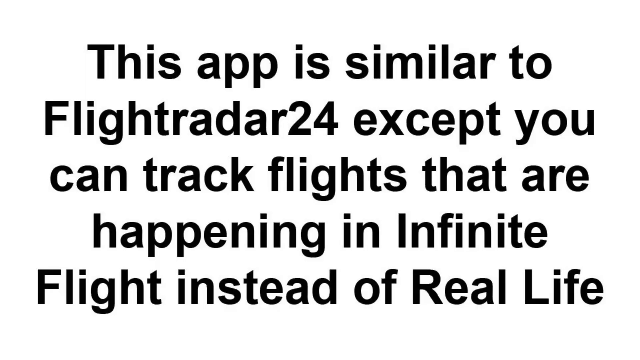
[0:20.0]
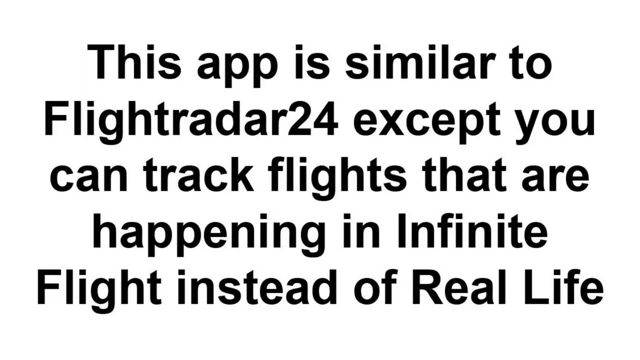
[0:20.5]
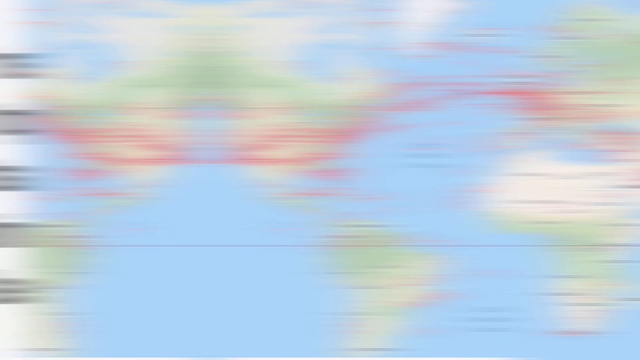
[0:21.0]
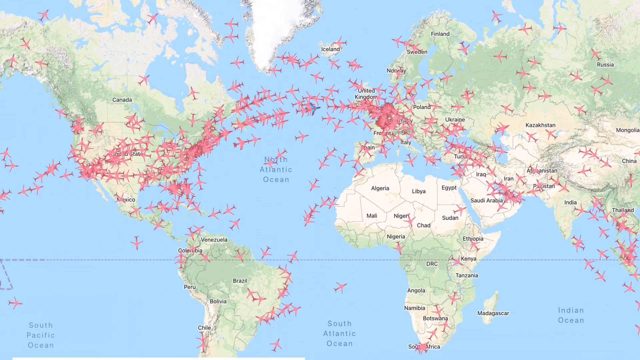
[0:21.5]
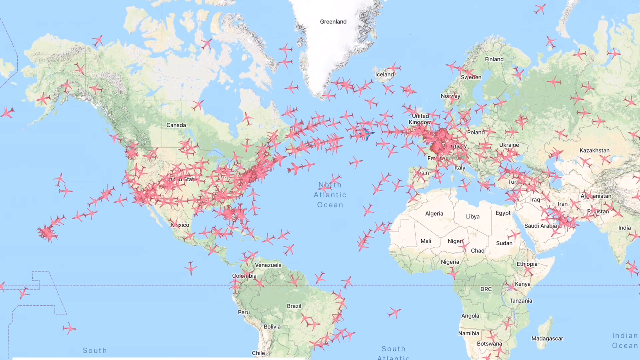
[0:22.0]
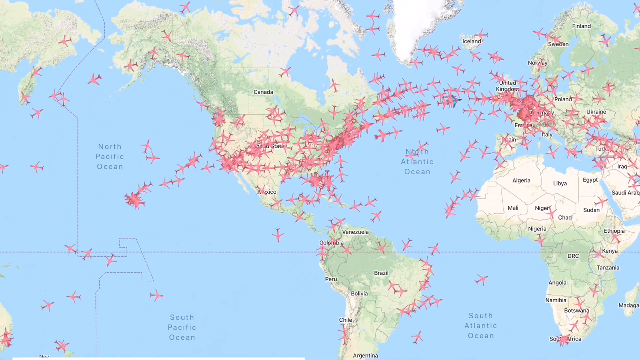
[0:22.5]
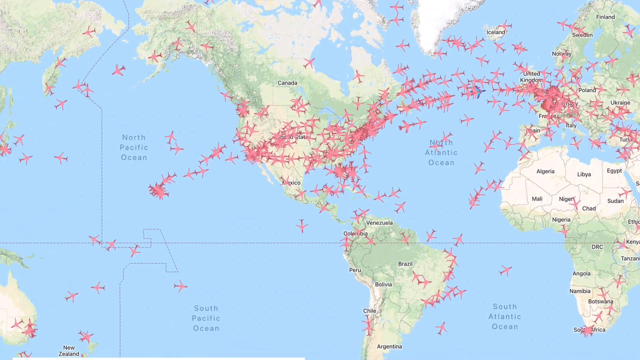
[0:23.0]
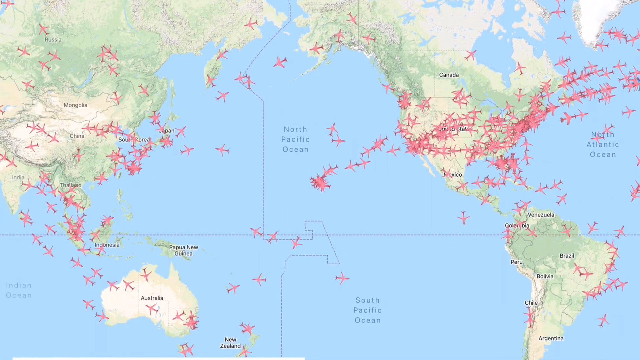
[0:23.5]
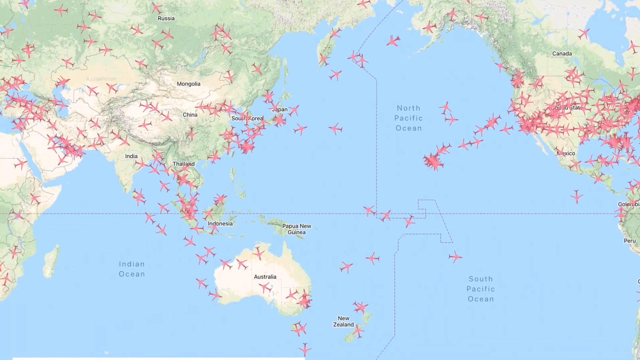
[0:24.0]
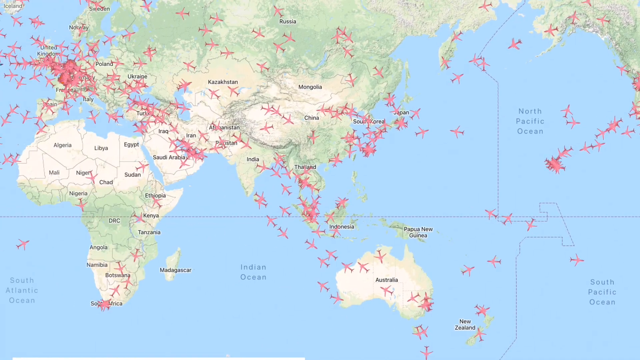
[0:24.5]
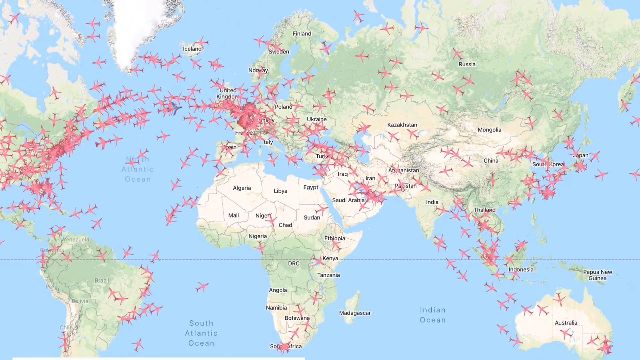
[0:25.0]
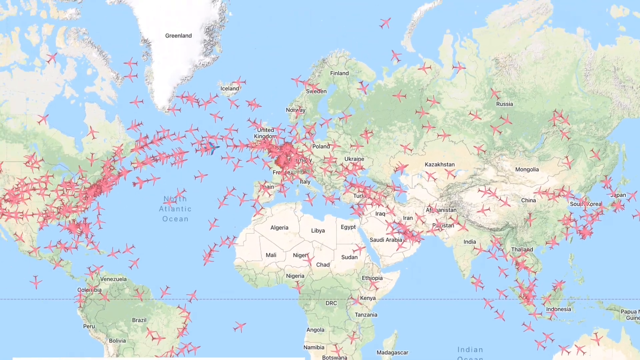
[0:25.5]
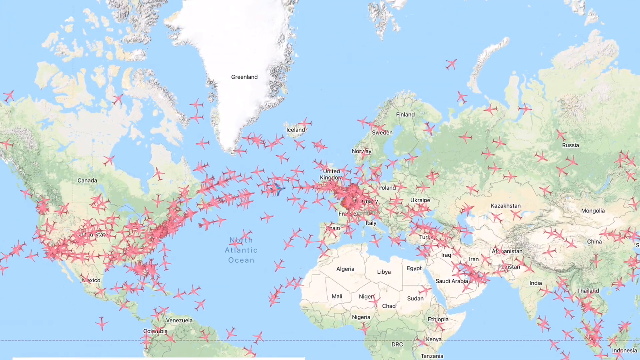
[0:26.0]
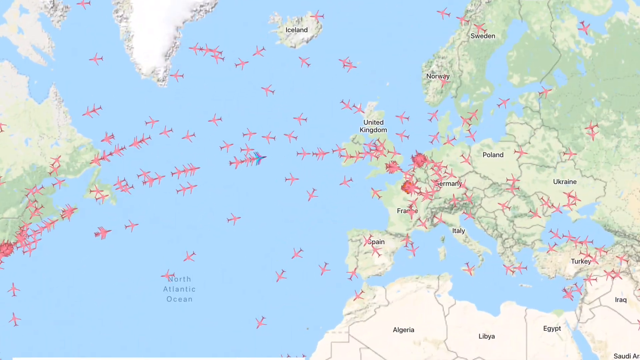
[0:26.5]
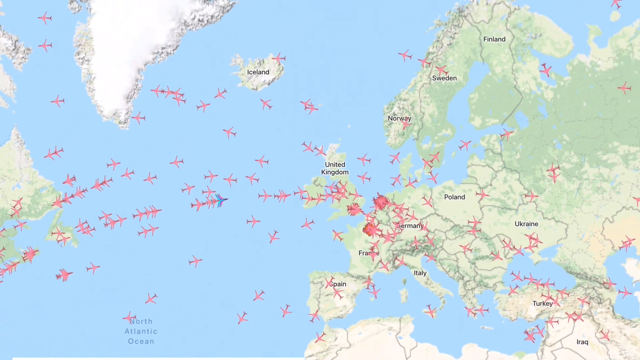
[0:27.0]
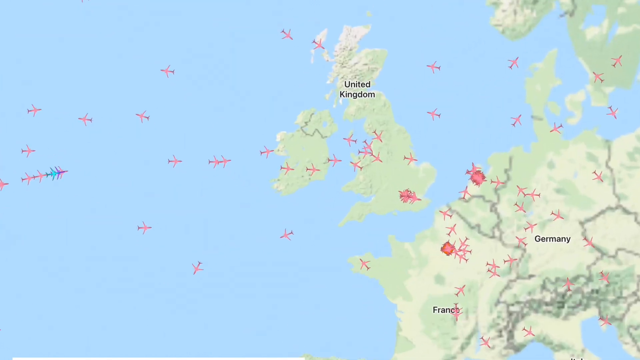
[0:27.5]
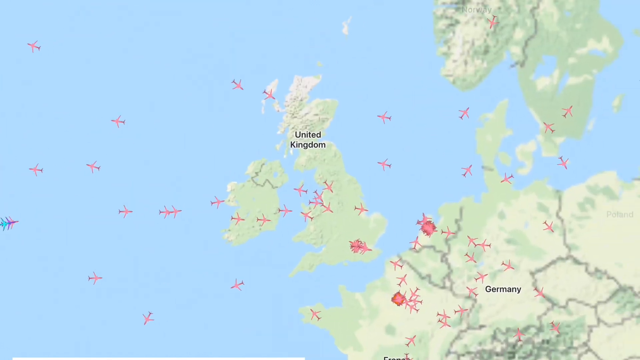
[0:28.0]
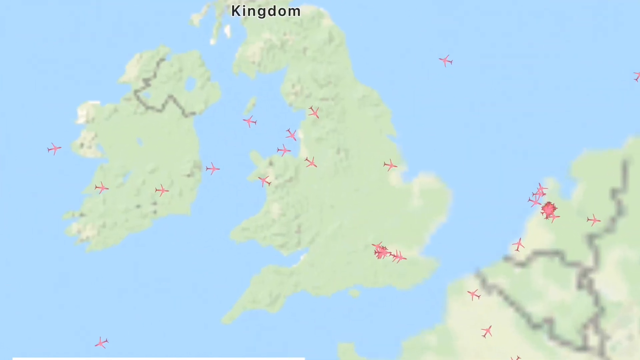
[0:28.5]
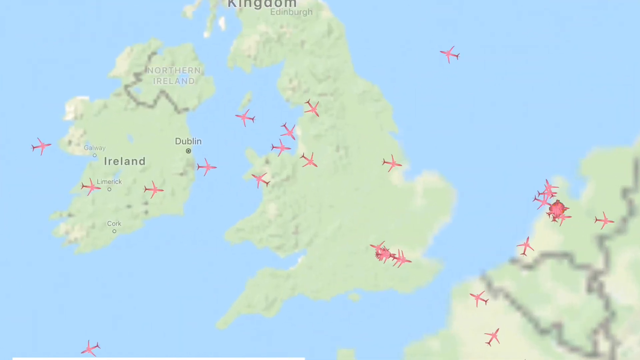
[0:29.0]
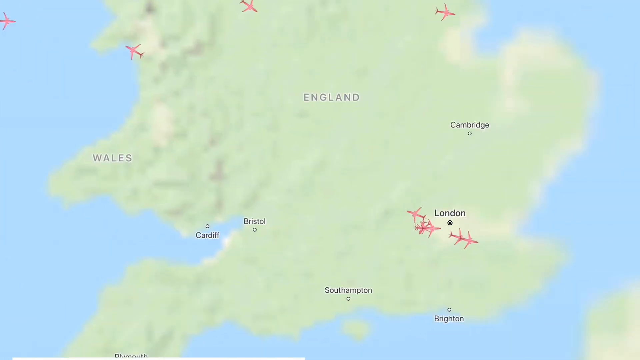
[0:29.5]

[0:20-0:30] Text on the screen reads "this app is similar to Flightradar24 except you can track flights that are happening in Infinite Flight, real life." The view then changes to a map of the world in a flight tracker app, showing flights in real time all over the world, from the United States through Europe, Africa, South America and Australia.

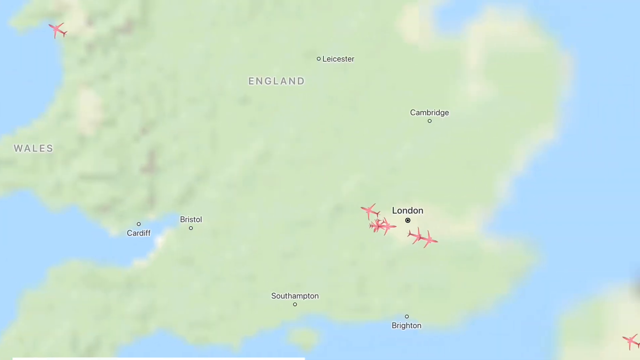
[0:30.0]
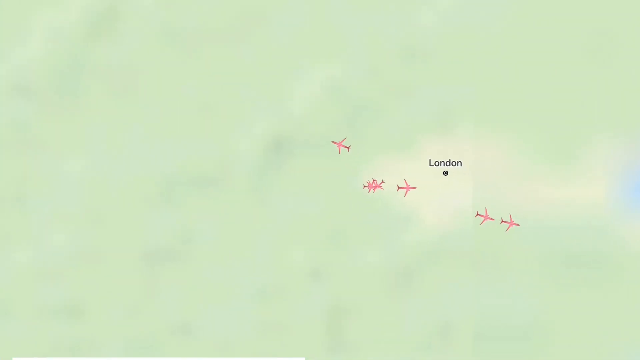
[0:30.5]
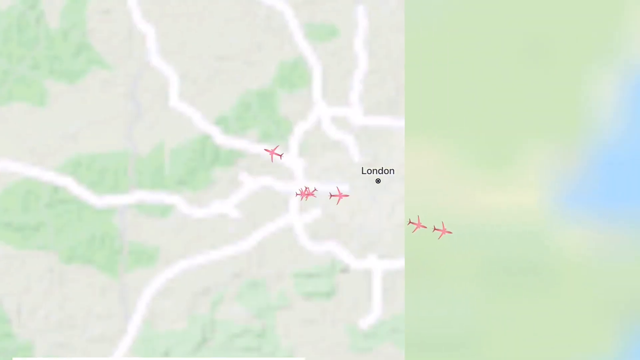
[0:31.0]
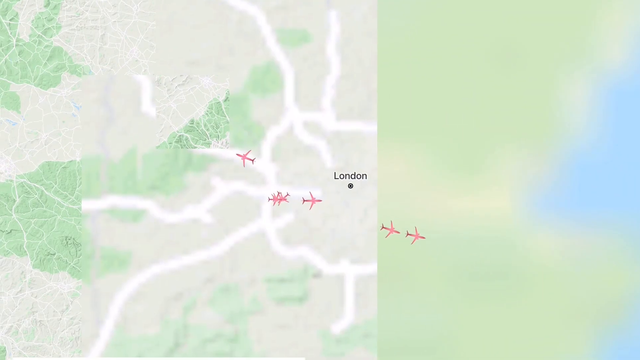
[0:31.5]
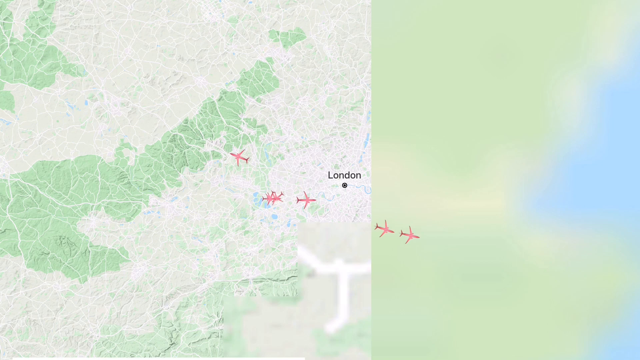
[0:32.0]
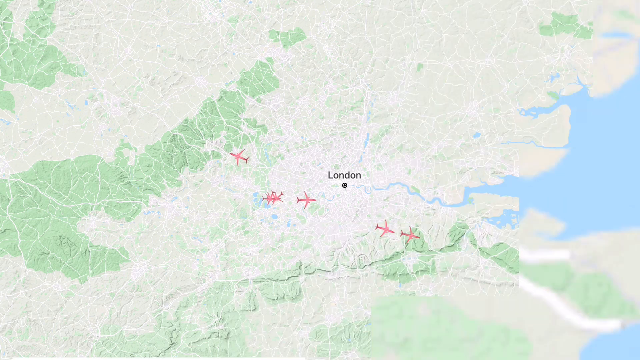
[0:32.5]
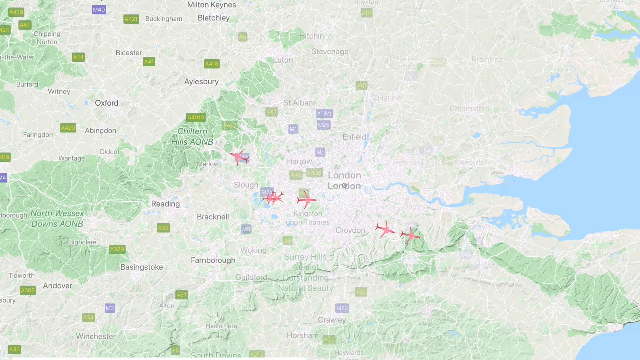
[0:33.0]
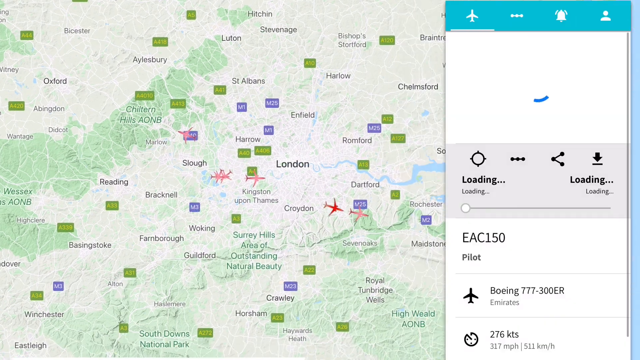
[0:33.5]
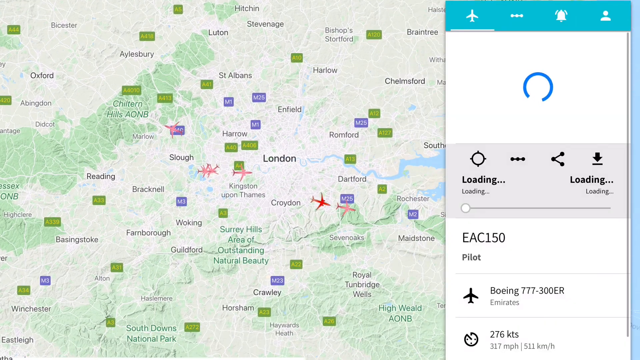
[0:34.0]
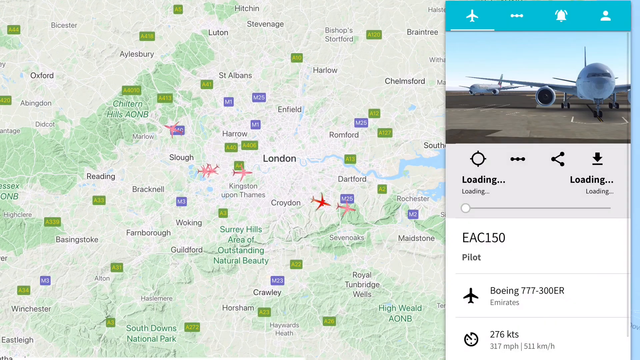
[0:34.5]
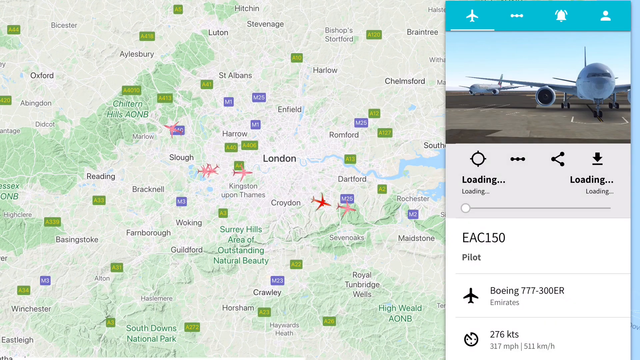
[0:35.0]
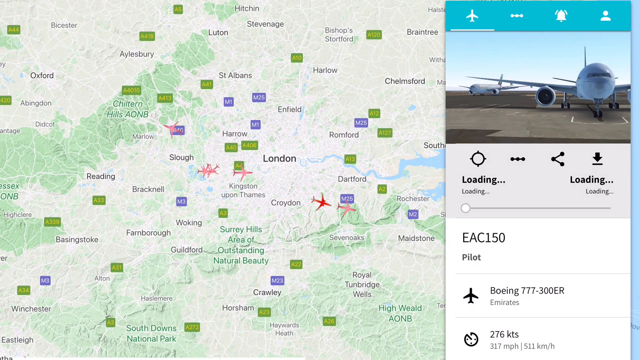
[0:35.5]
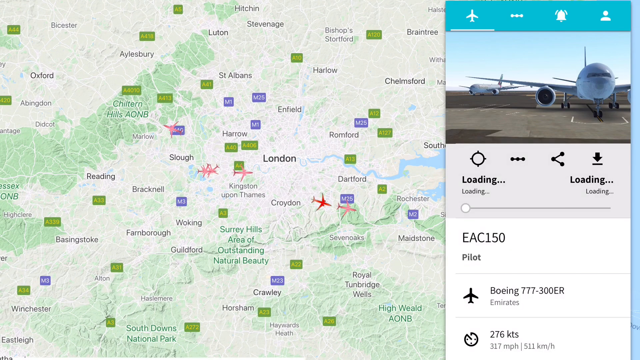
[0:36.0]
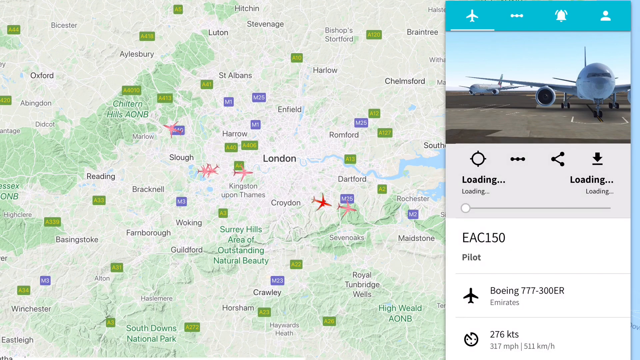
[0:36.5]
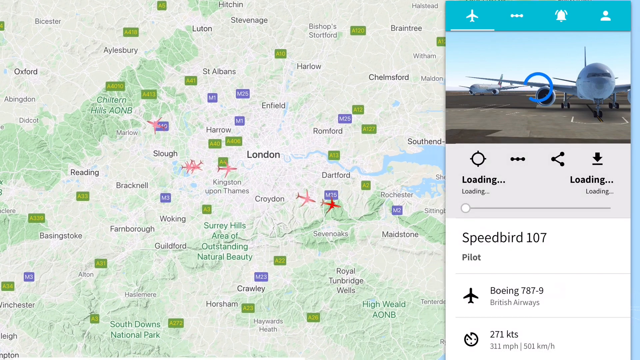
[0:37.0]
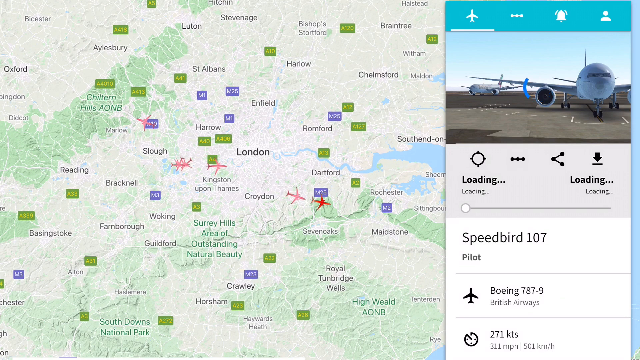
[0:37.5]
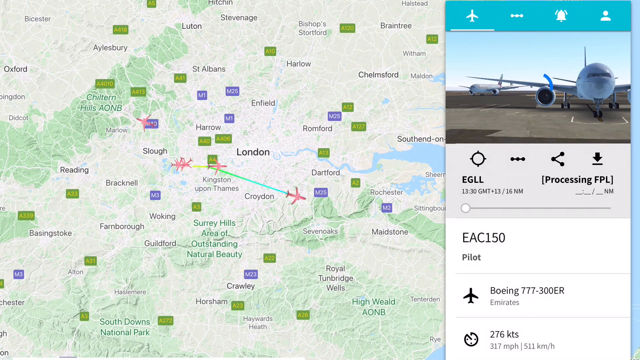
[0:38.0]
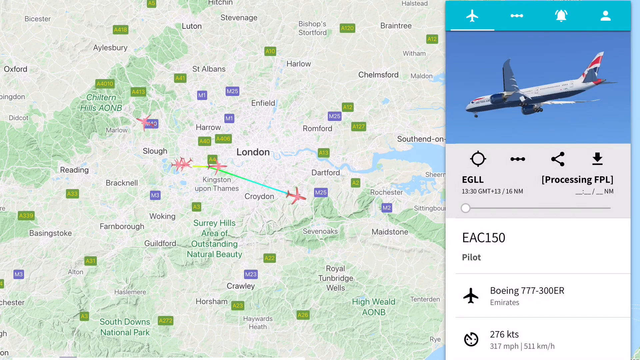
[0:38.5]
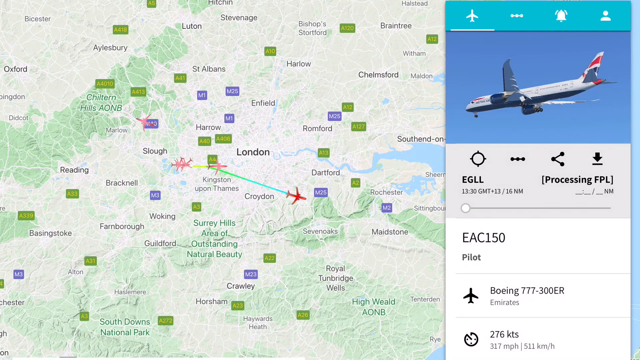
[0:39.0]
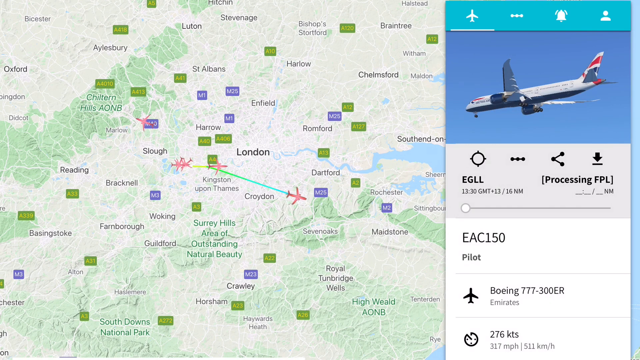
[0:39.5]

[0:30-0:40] A map in a flight tracker app shows several airplanes, several of them over the London area. The app zooms in closer to London, and the further it zooms in, the more information about the flights appears. The selected flight is EAC-150, a Boeing 777. An image of the aircraft appears in the upper right part of the screen, while the flight tracker part of the app is on the left, tracking the flight in real time. Several aircraft images on the map over London can be tracked.